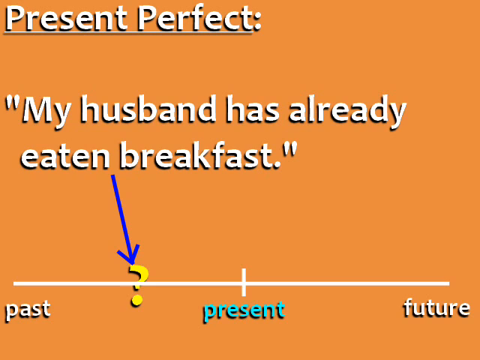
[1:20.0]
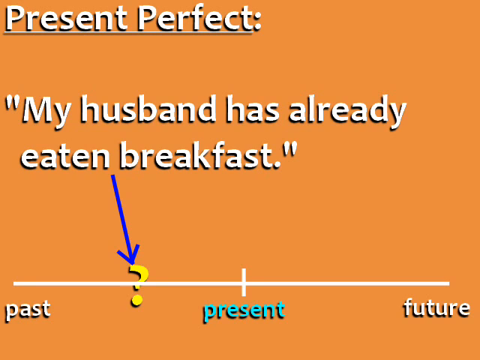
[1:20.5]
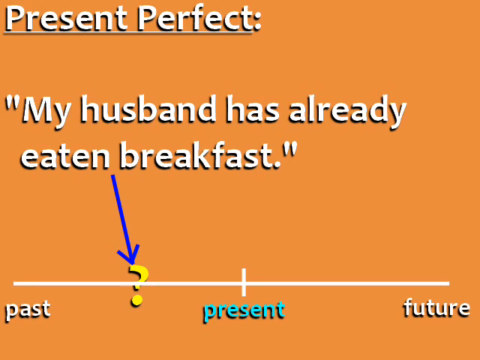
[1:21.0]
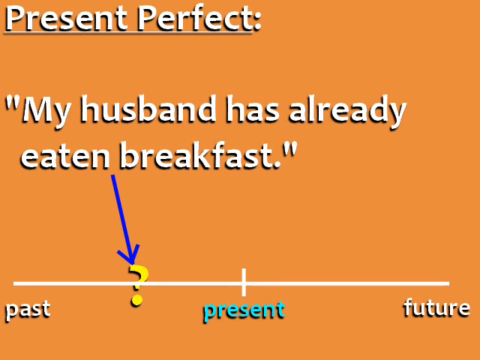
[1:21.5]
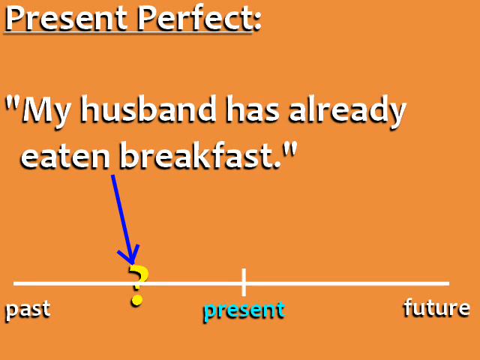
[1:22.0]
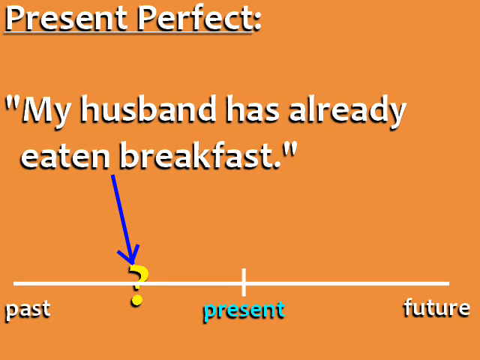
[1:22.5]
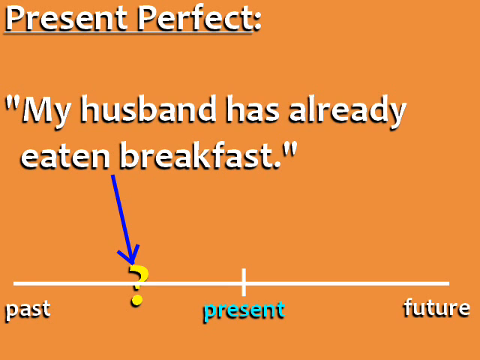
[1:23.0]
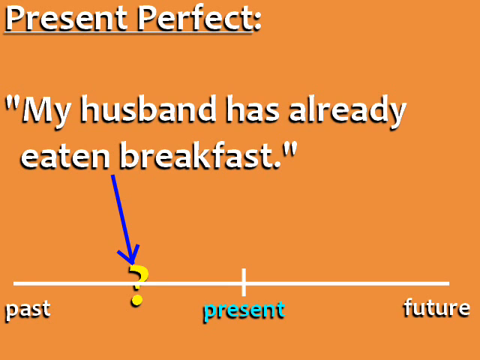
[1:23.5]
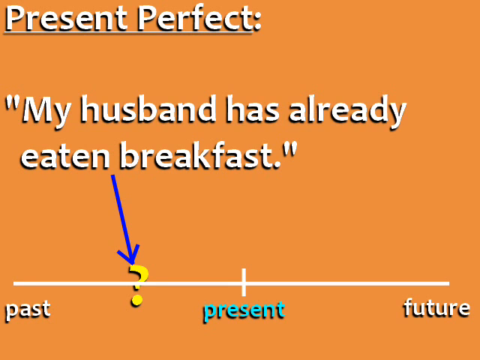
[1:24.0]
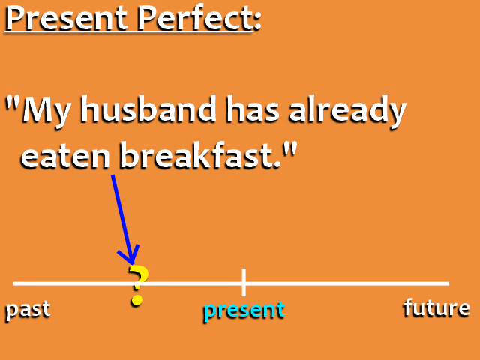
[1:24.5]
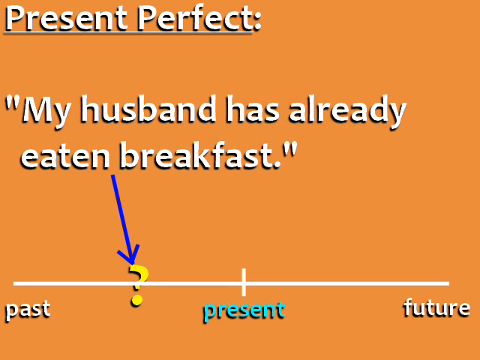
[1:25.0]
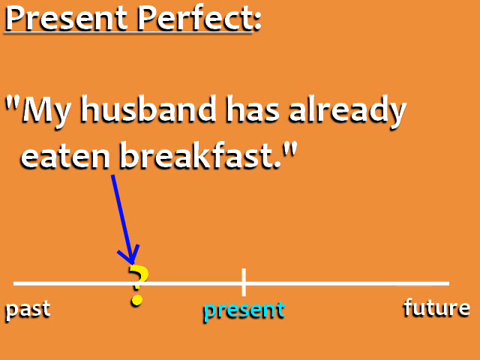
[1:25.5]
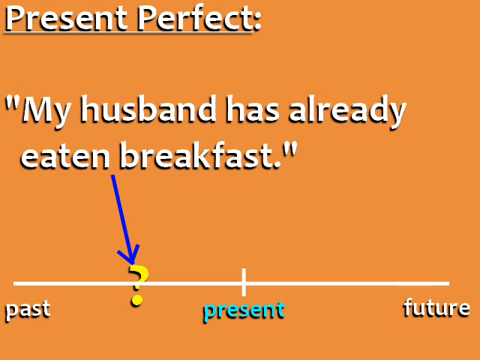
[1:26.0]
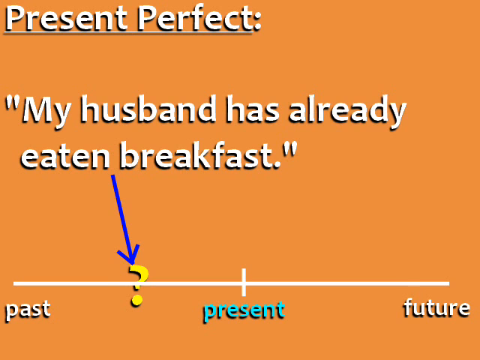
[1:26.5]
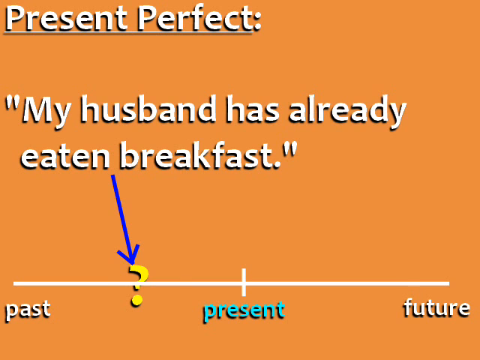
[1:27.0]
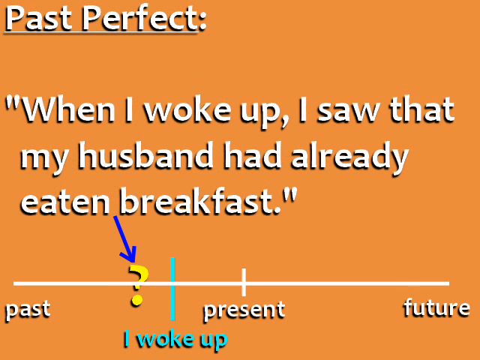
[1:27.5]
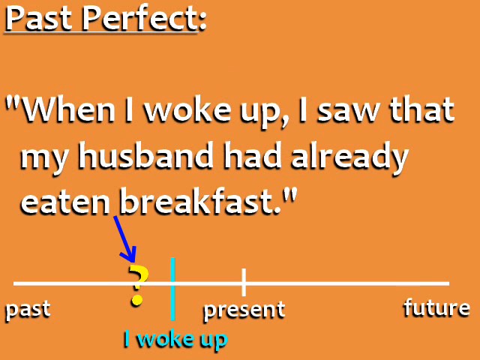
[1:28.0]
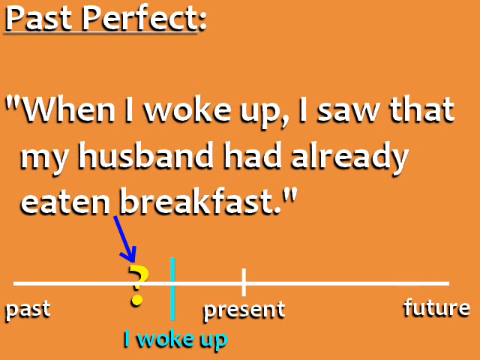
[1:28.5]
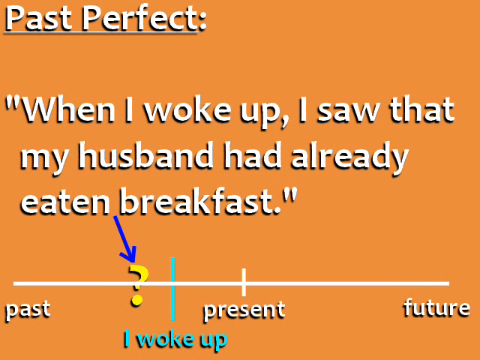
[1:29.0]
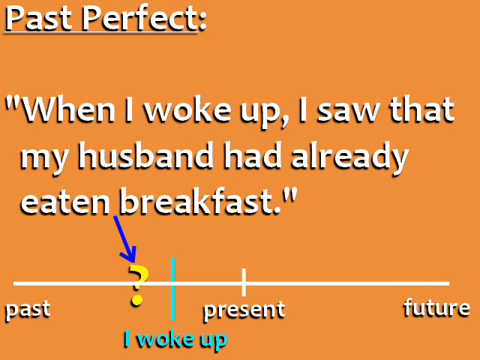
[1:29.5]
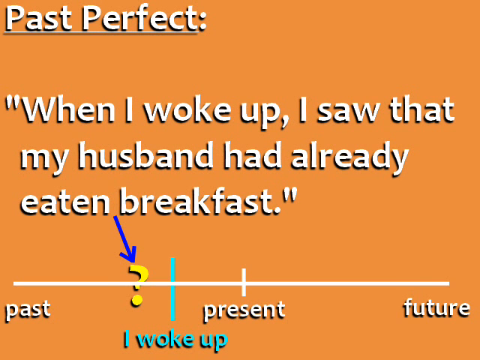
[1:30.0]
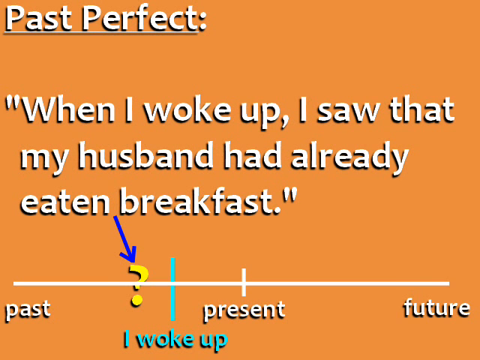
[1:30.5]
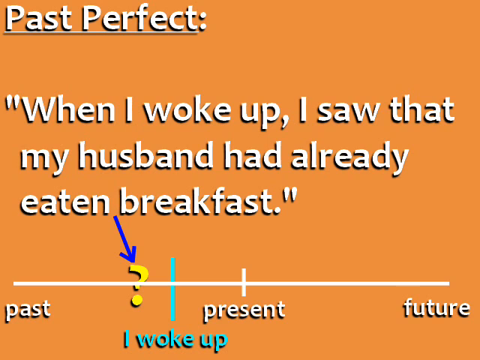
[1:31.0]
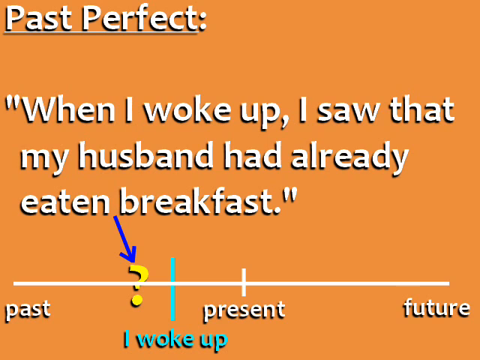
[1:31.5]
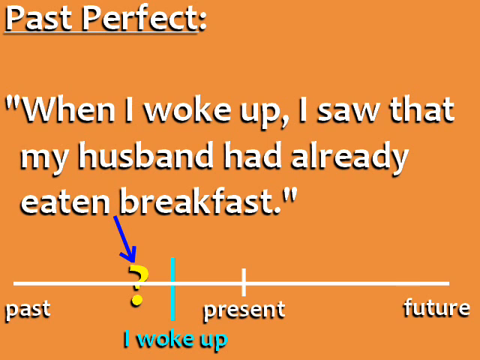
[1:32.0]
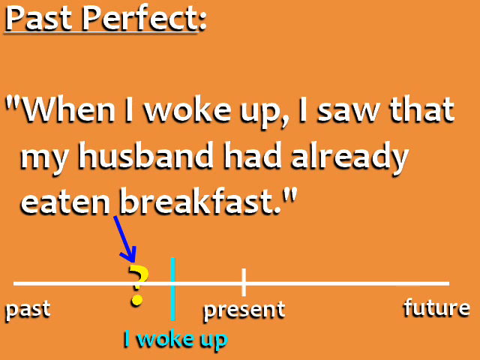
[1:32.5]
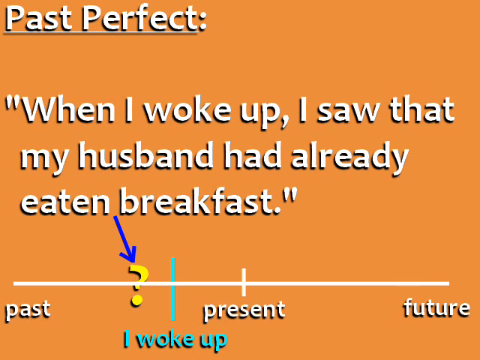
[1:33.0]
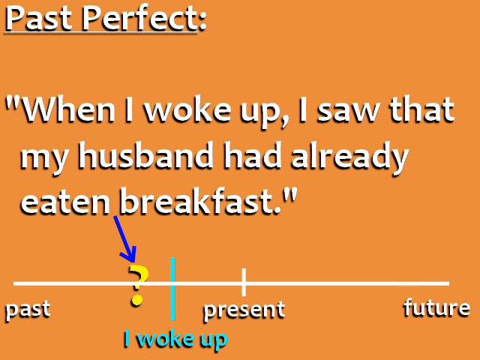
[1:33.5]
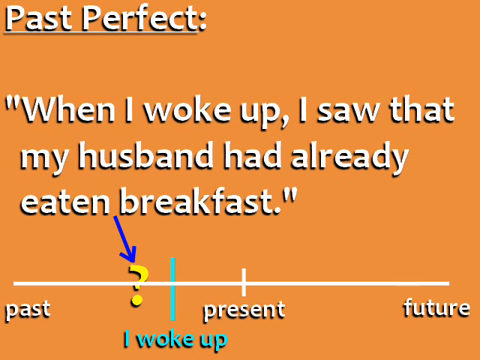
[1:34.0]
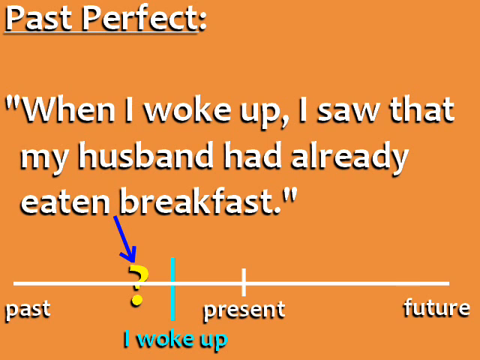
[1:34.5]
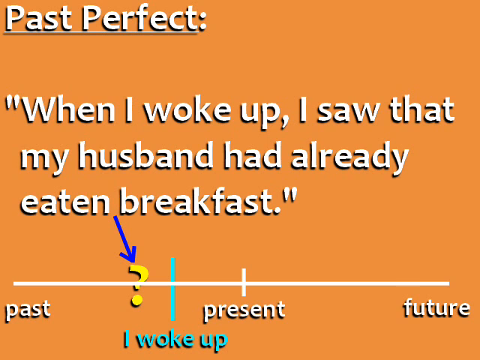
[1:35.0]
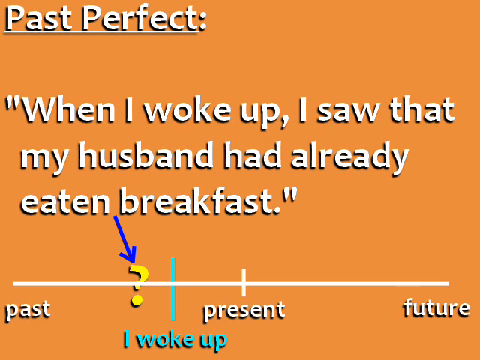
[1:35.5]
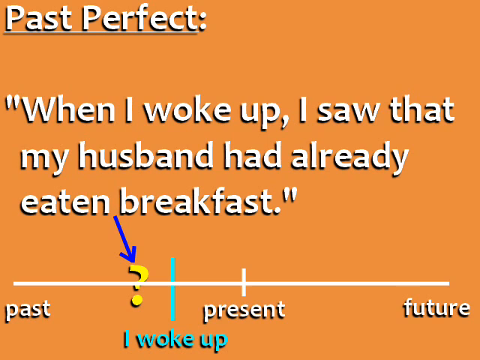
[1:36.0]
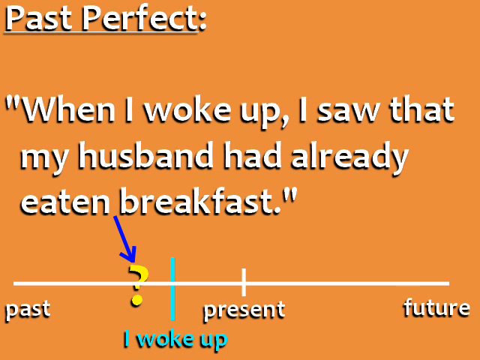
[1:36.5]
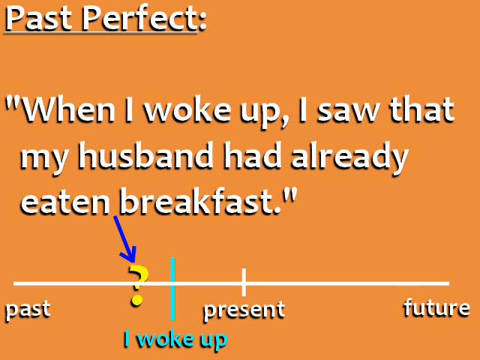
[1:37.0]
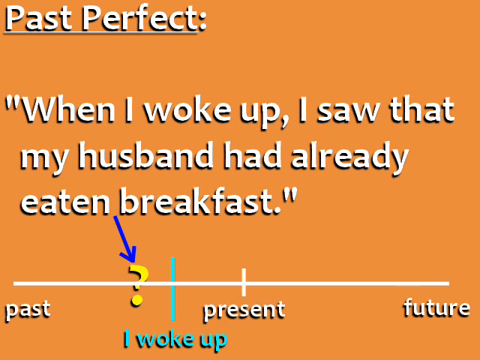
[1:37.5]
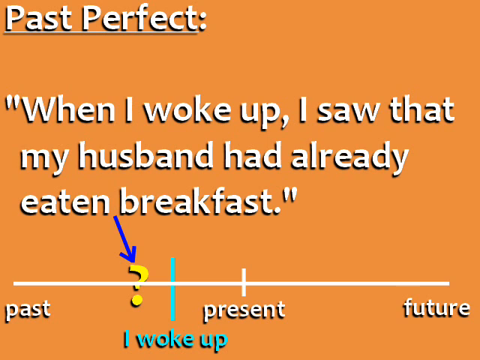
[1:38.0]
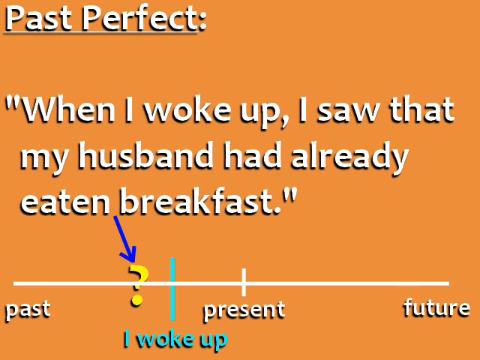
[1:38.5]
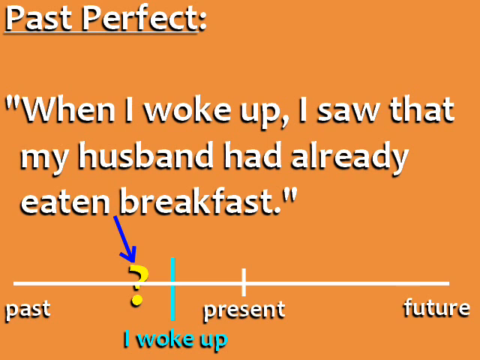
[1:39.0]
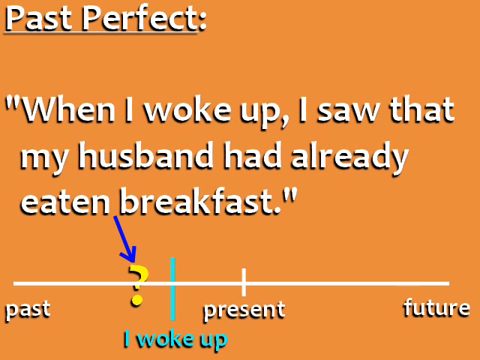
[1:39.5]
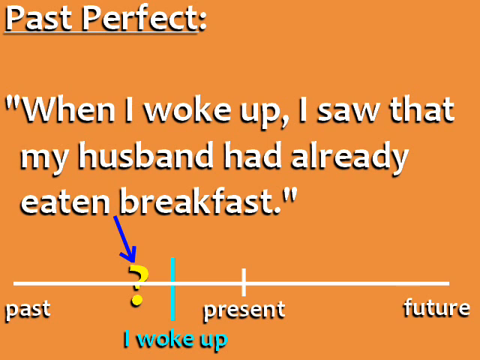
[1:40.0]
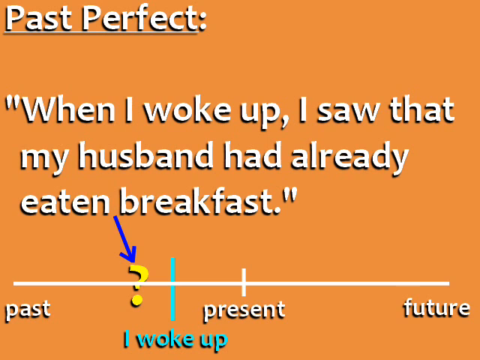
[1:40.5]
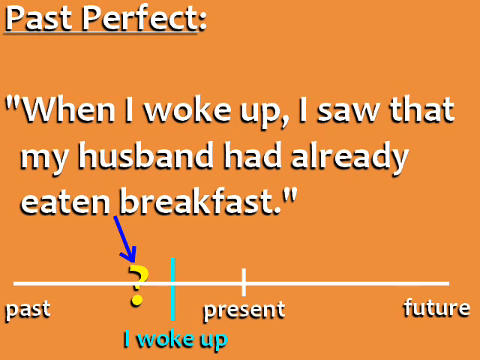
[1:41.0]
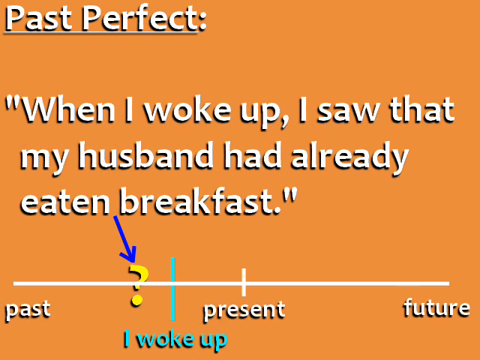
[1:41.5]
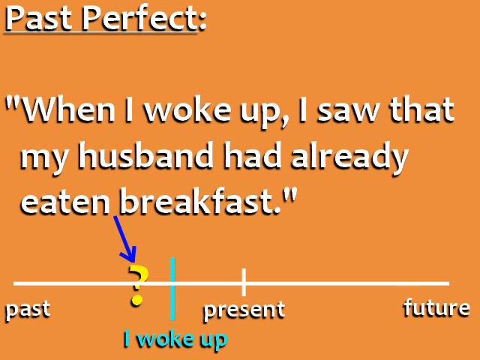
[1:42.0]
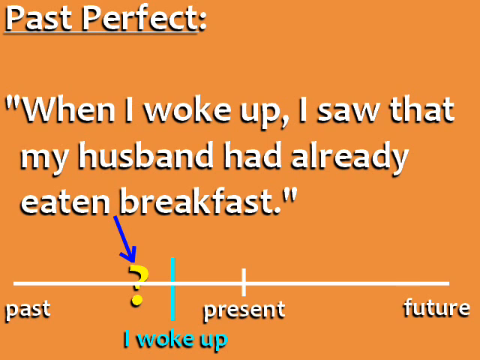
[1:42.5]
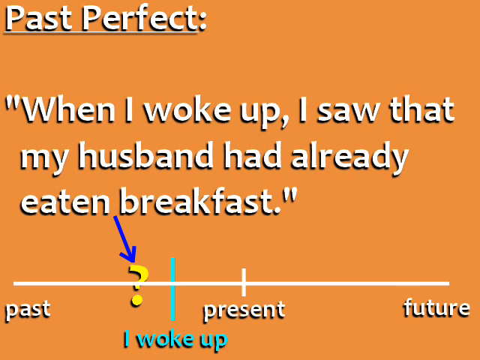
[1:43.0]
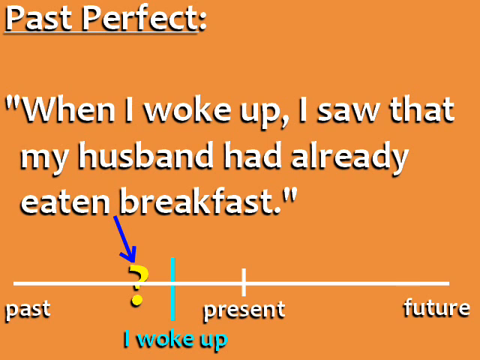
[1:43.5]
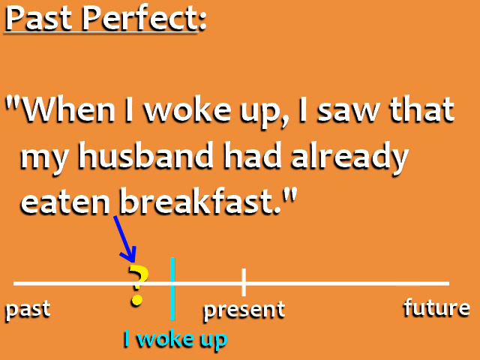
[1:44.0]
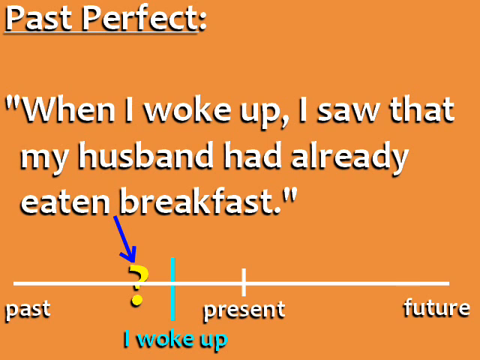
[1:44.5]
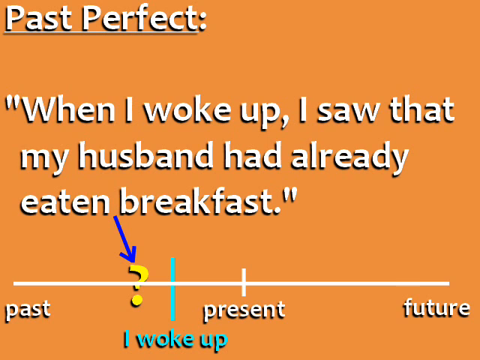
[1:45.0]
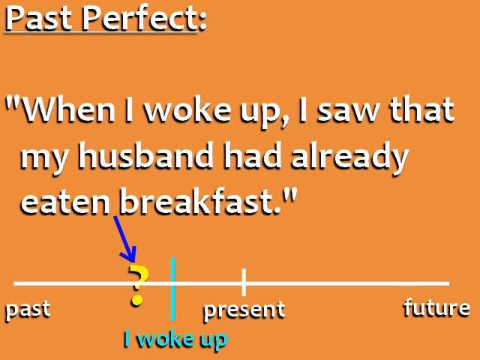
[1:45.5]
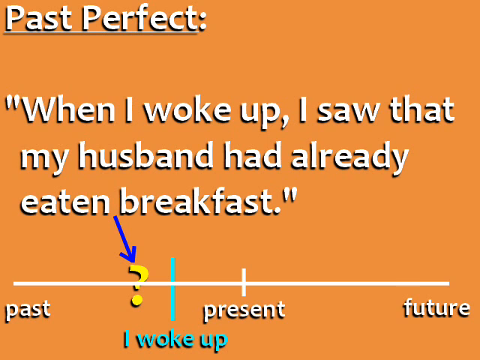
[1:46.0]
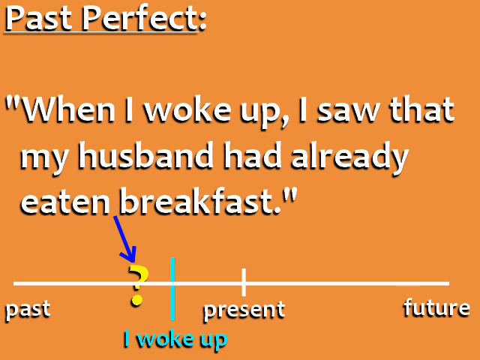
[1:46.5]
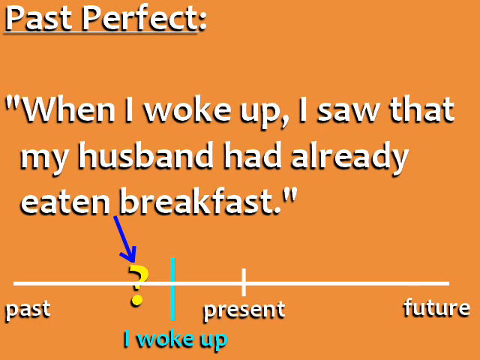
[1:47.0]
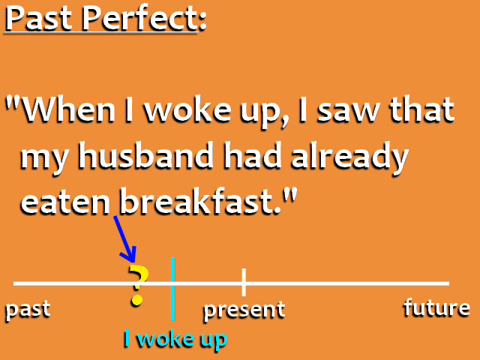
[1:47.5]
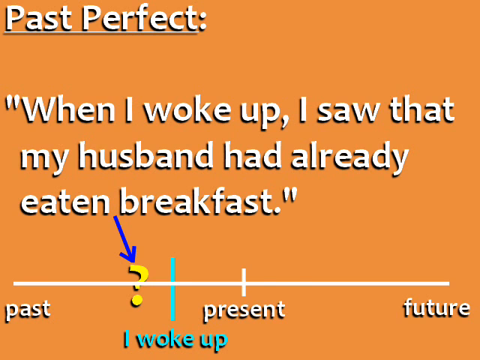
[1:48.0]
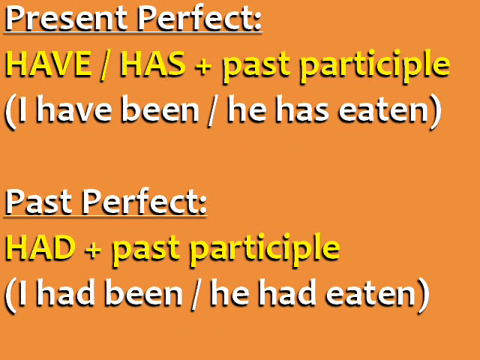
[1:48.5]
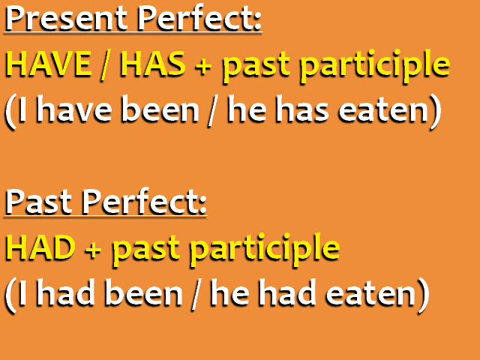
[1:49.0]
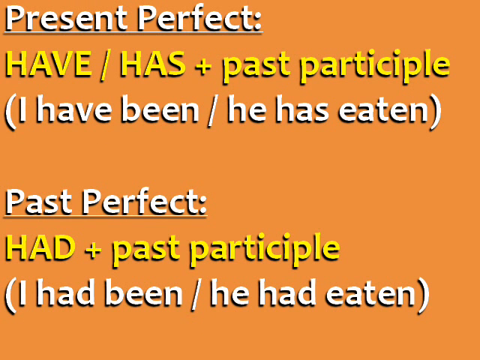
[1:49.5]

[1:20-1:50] The video stays on the present perfect, with the example "my husband has already eaten breakfast" and a blue arrow pointing at the question mark, with present, past and future shown. A past perfect example follows: "when I woke up I saw that my husband had already eaten breakfast." A blue arrow points at the question mark between the present and the past, and a line points at "woke up." The words that indicate the past perfect are highlighted, with an arrow pointing to "I woke up" between the past and the present.